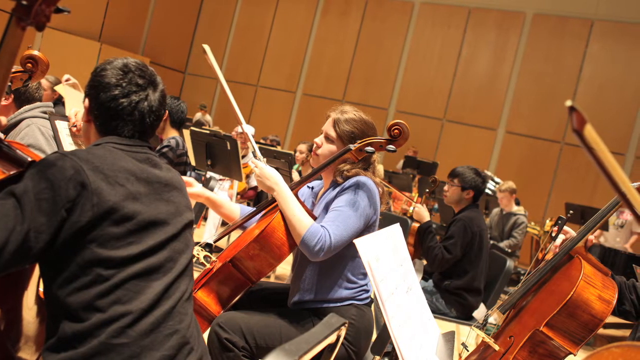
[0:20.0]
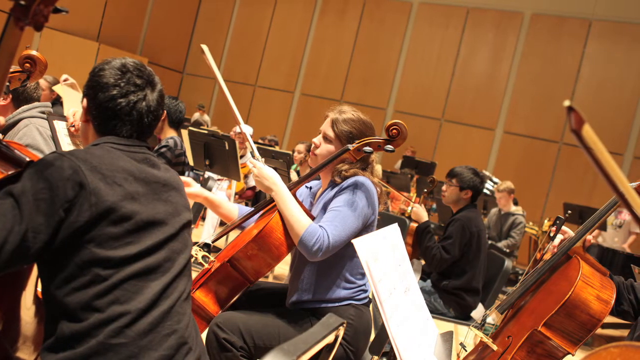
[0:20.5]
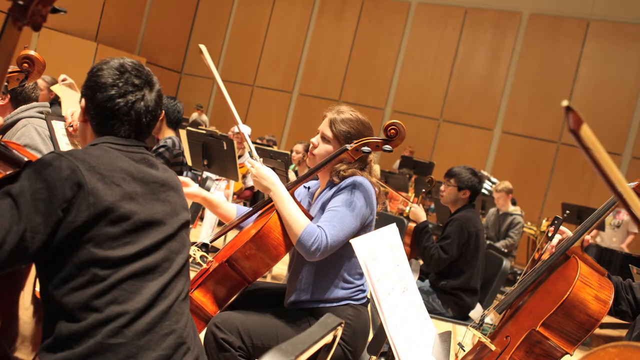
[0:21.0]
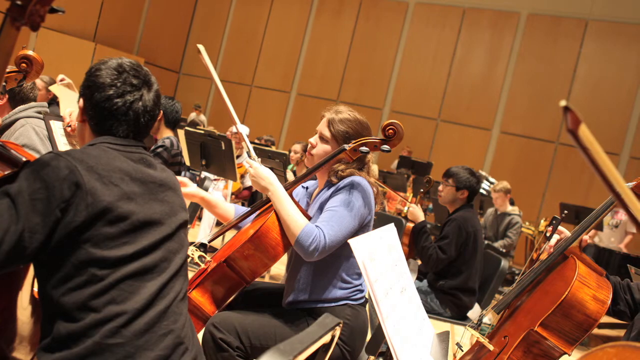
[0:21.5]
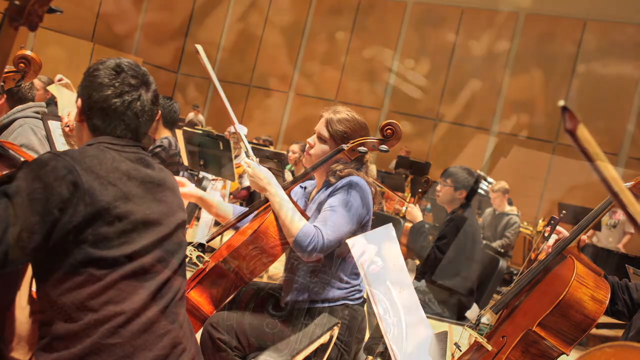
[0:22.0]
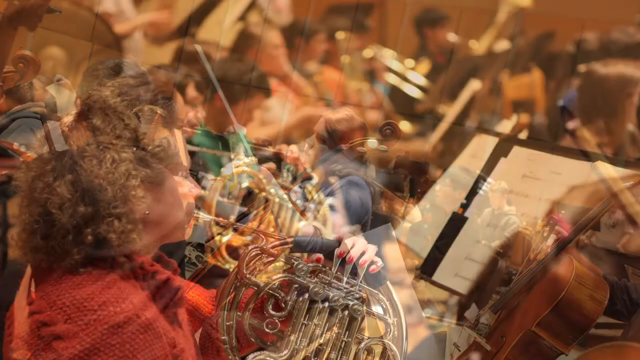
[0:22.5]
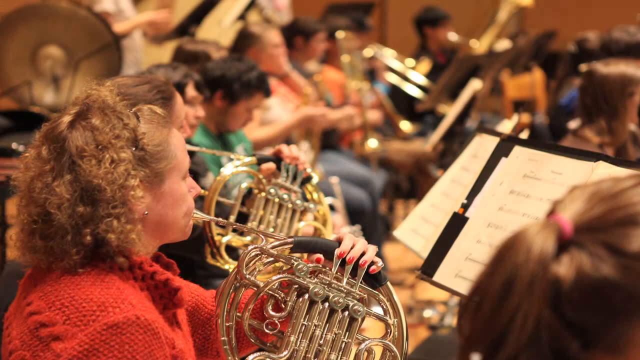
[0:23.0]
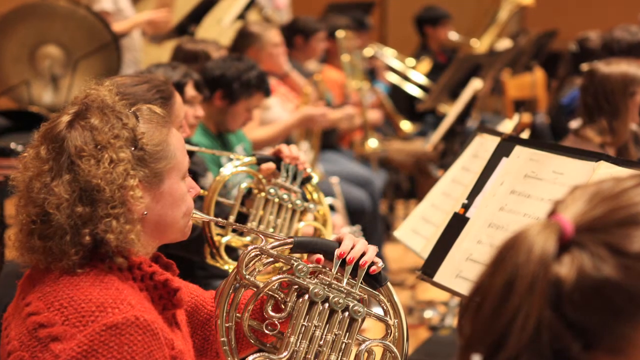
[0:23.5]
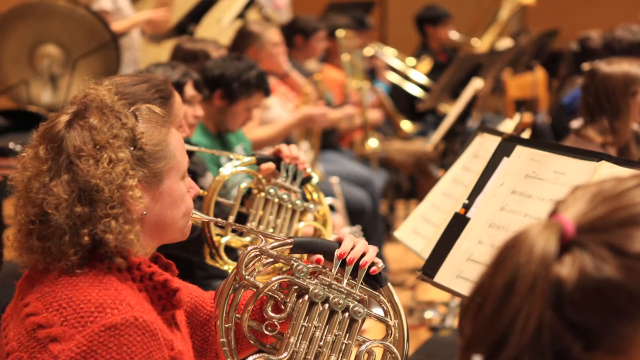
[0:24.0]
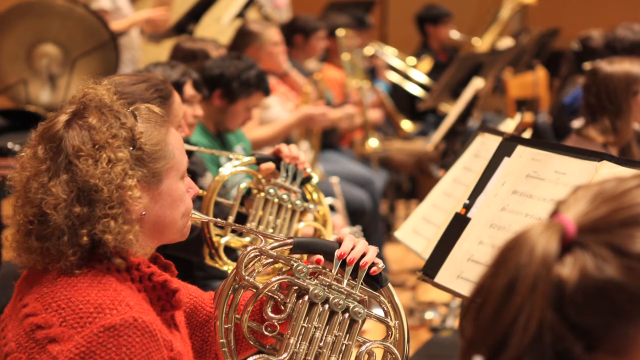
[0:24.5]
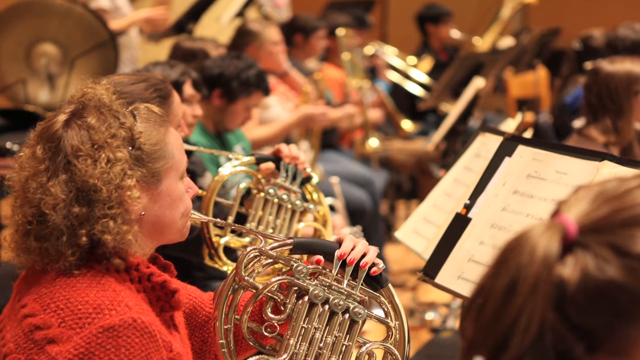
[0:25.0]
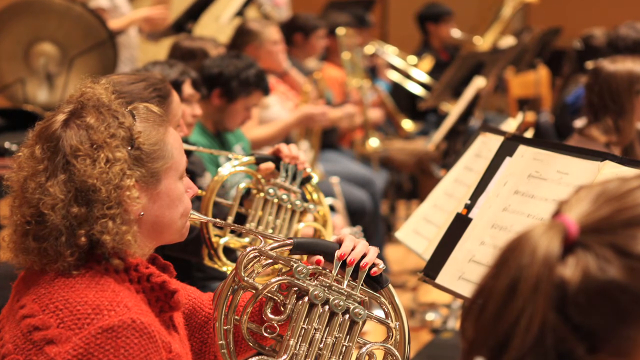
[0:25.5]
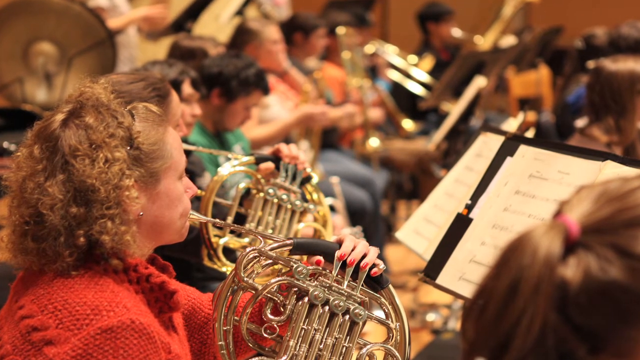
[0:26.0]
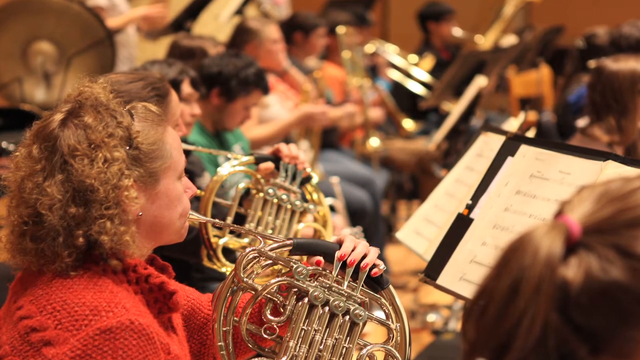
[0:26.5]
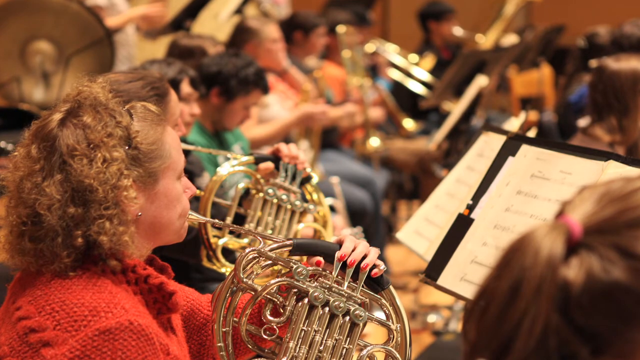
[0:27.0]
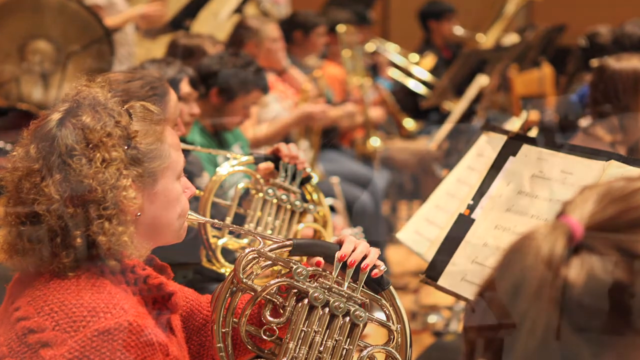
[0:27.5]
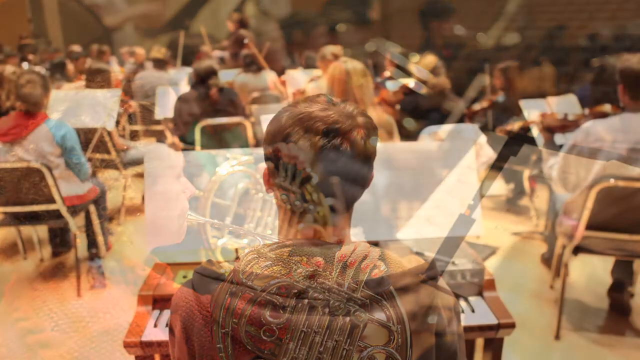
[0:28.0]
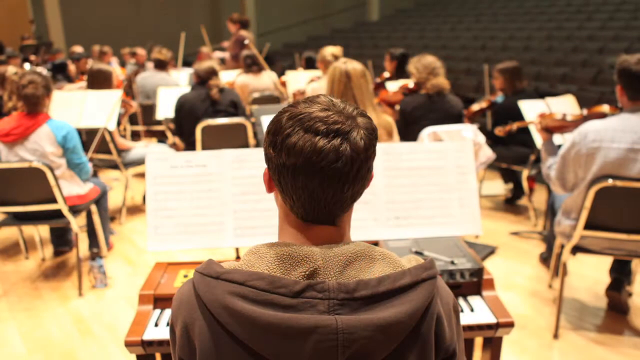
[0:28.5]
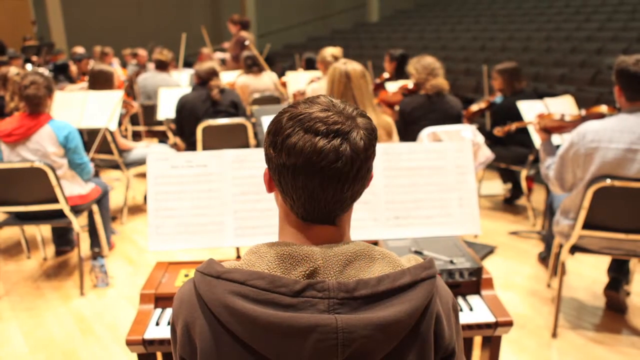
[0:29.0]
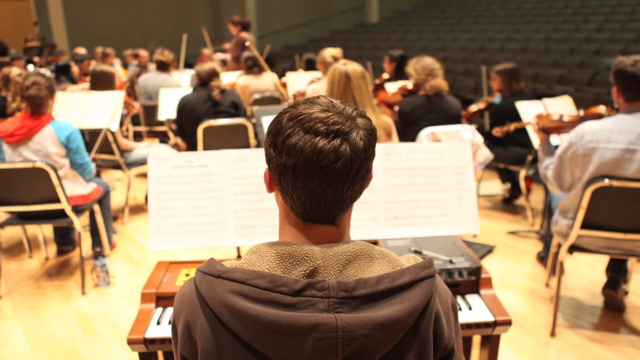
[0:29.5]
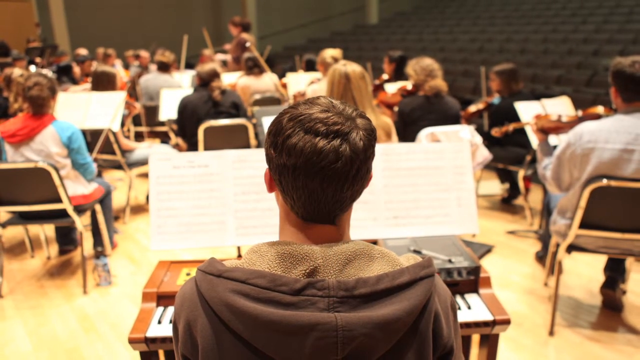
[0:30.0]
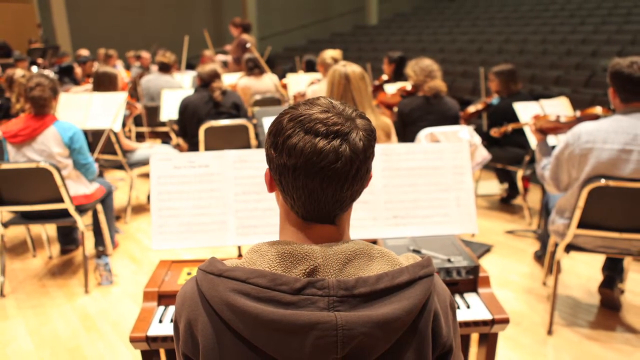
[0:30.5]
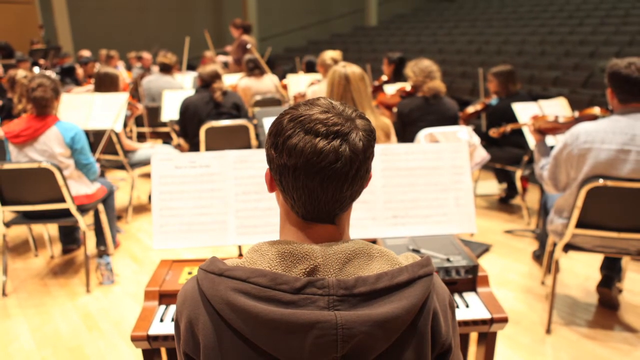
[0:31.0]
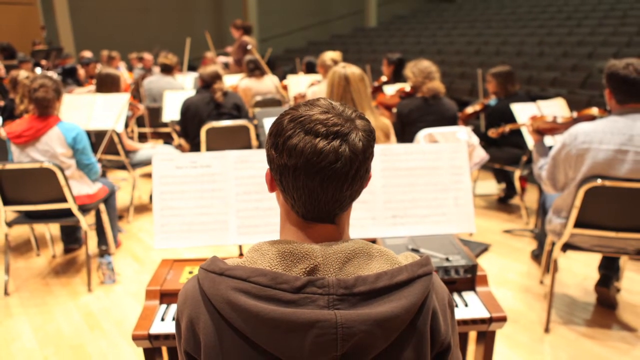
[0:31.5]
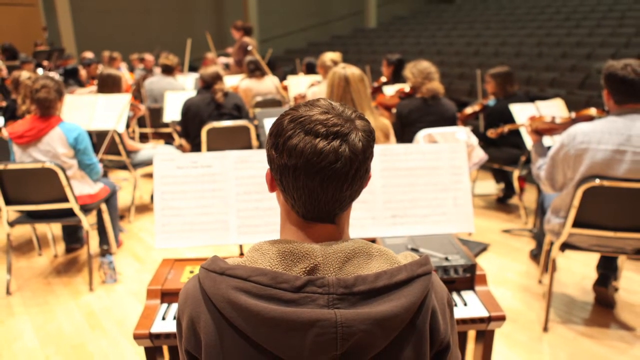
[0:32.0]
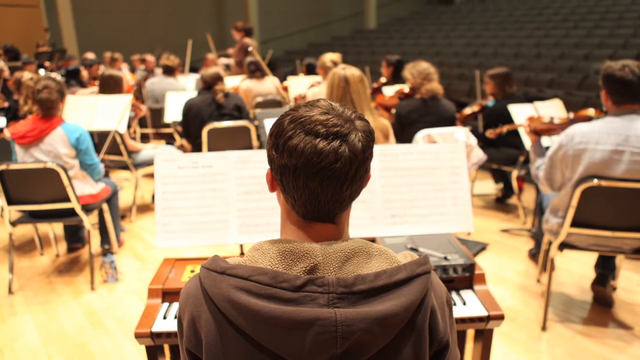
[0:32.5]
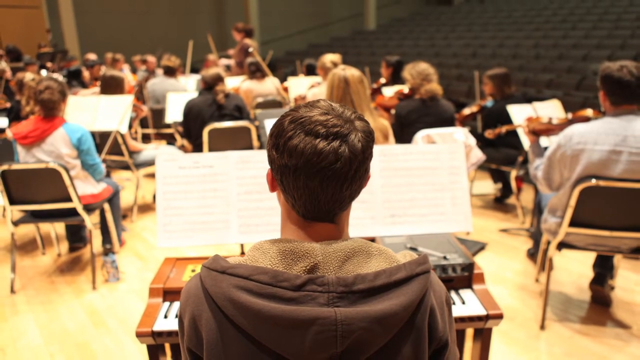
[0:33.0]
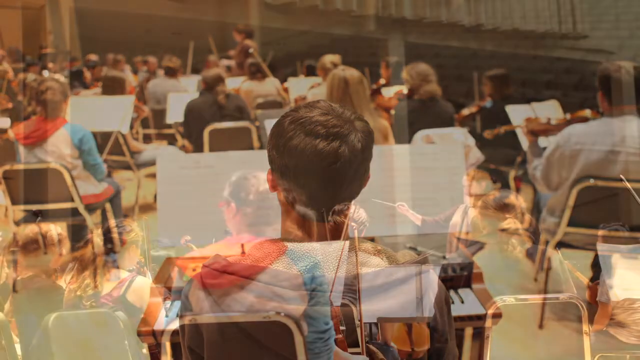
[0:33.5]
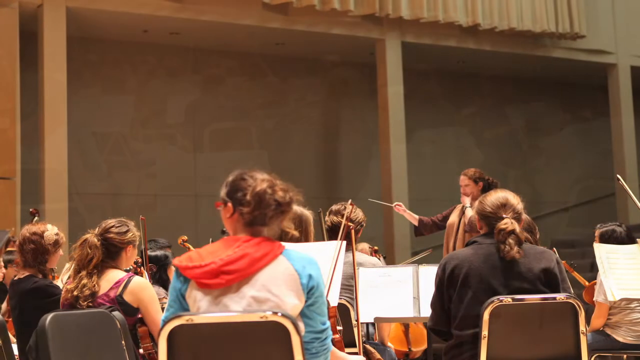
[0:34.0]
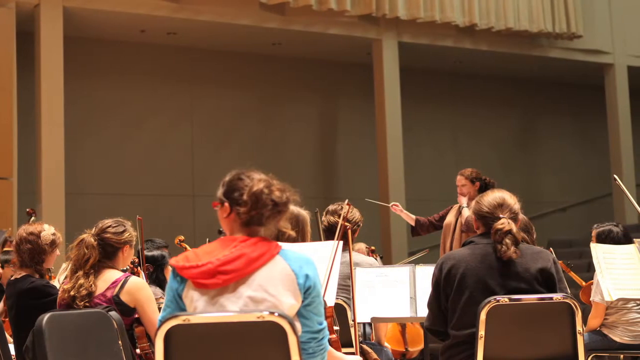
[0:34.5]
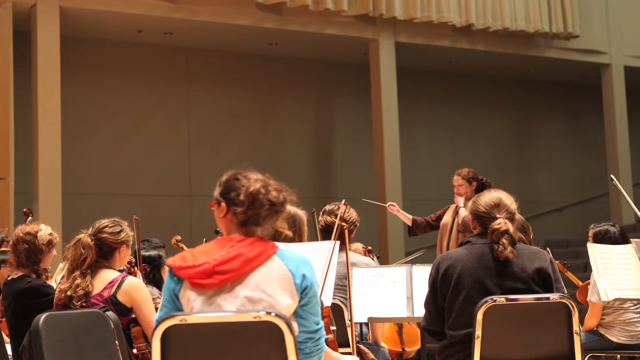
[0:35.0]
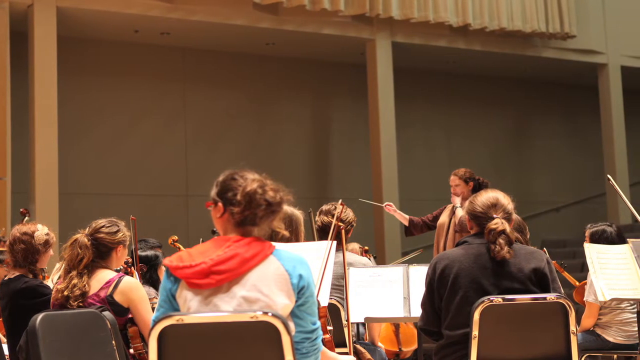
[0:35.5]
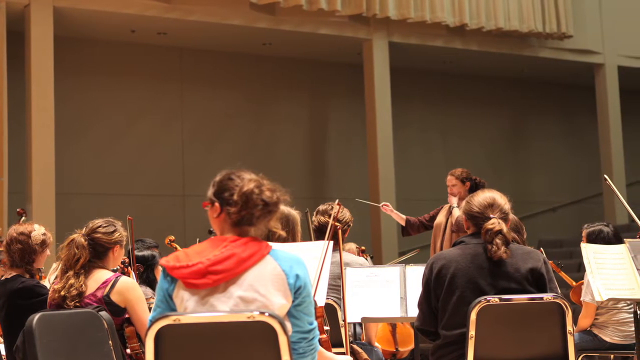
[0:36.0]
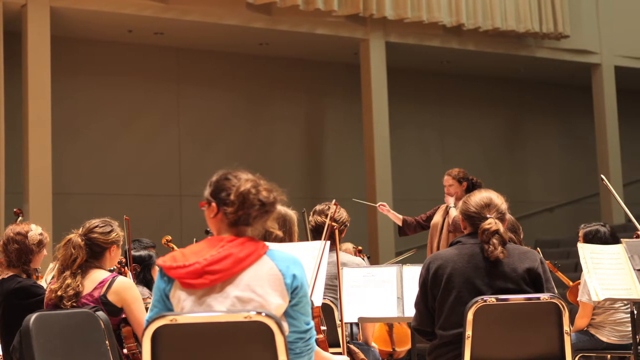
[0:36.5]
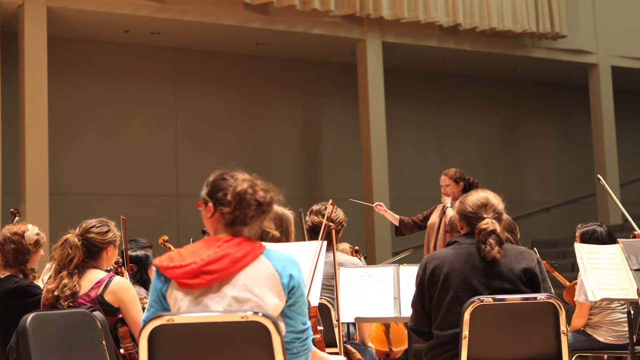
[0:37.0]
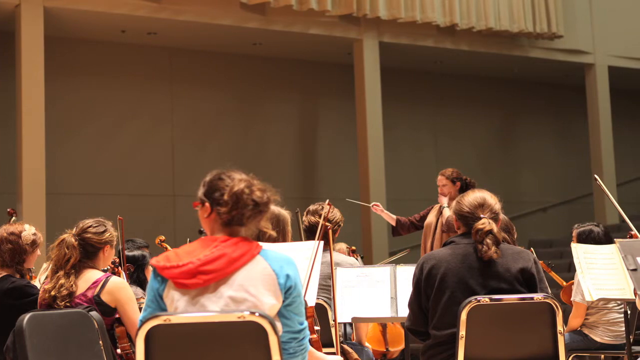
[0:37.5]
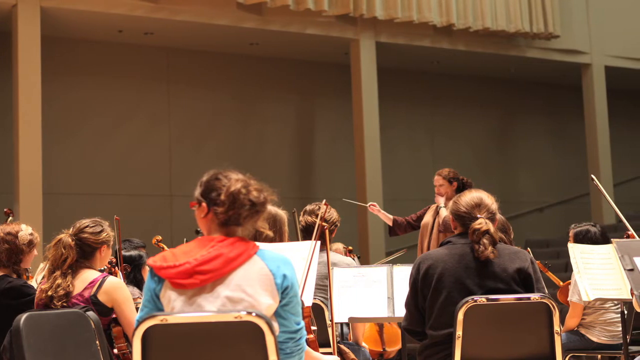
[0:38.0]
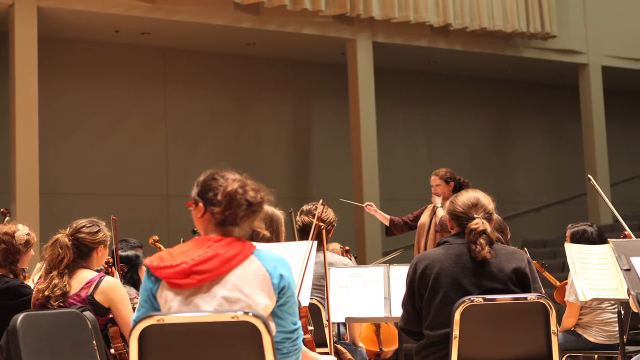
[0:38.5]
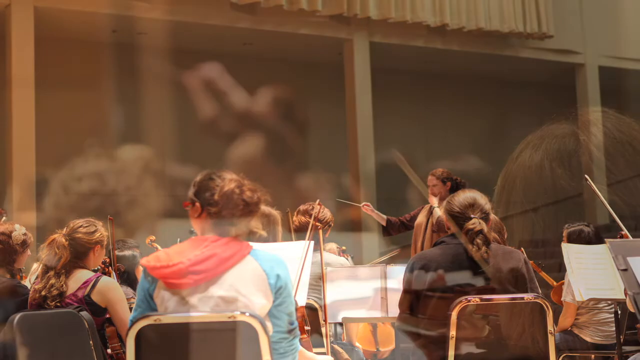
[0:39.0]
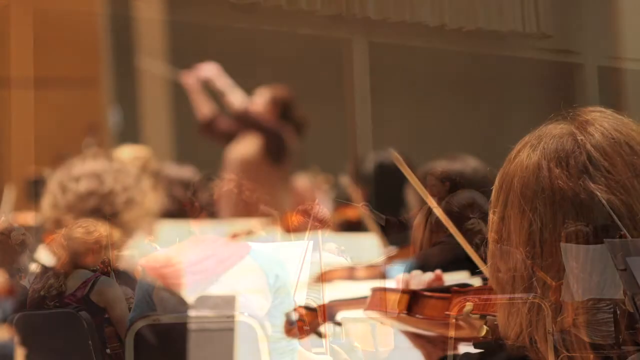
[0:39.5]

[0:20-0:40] An orchestra plays in a large hall, shown in still images. Dozens of people make up the orchestra, playing stringed instruments, brass instruments and some keyboards. The walls are made of several different types of panels. The majority of the instruments are stringed, including stand-up basses rested on the ground and handheld stringed instruments such as violins.